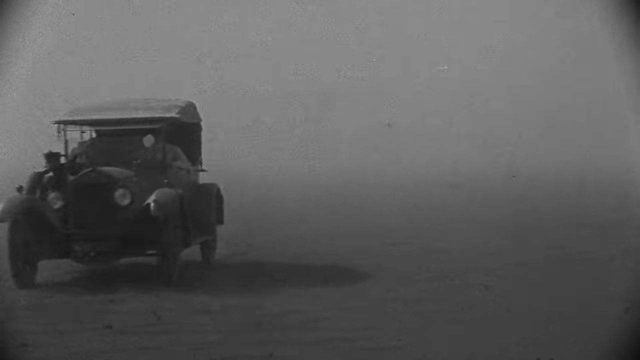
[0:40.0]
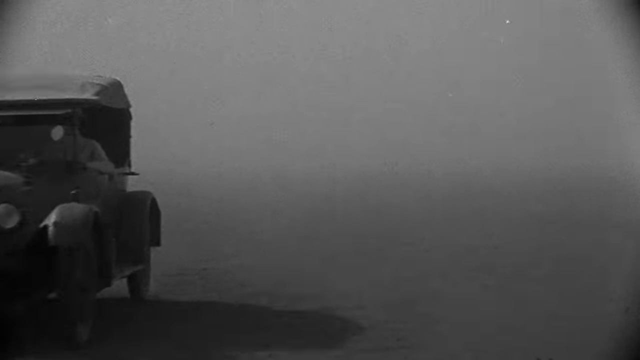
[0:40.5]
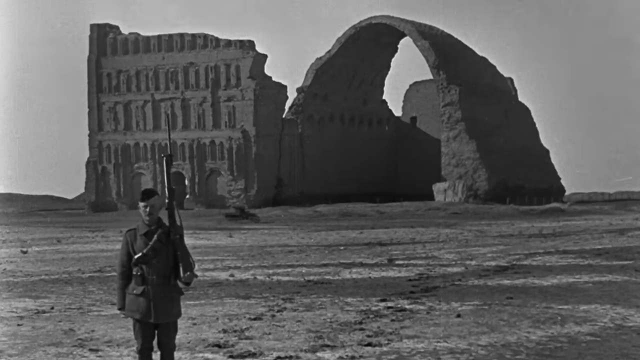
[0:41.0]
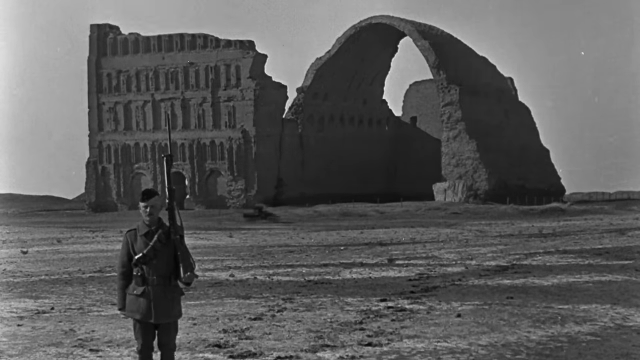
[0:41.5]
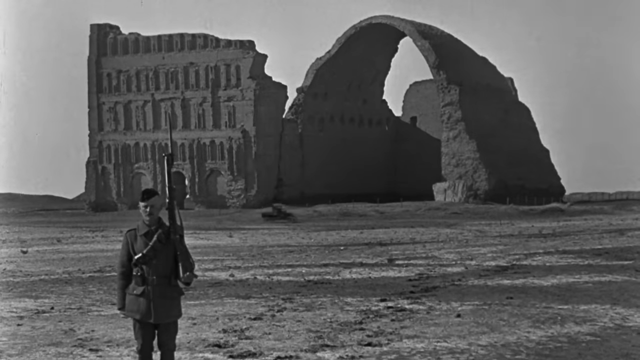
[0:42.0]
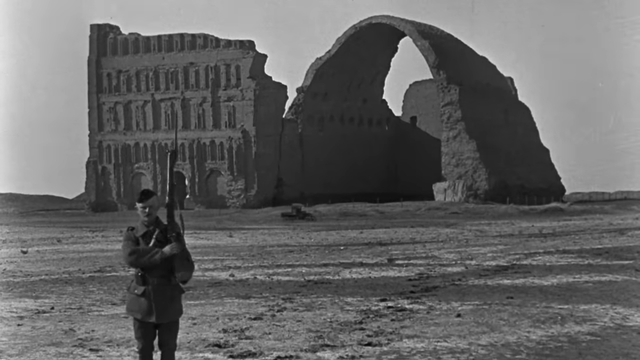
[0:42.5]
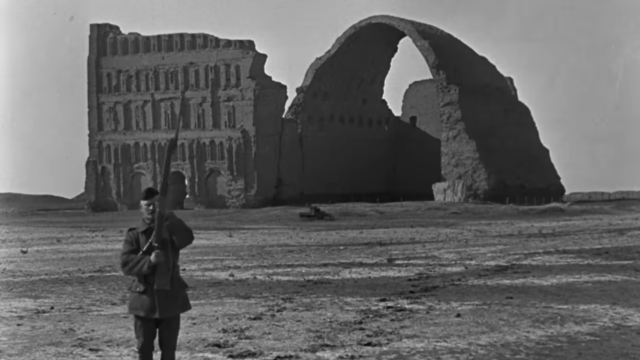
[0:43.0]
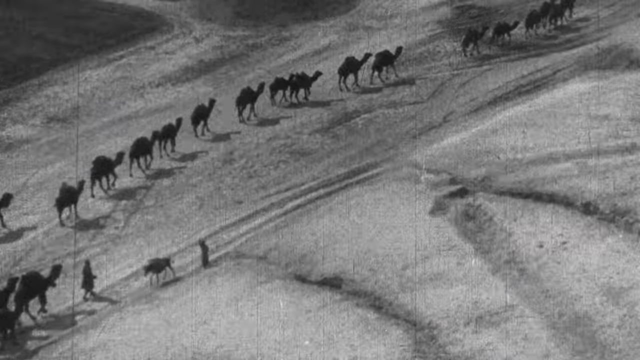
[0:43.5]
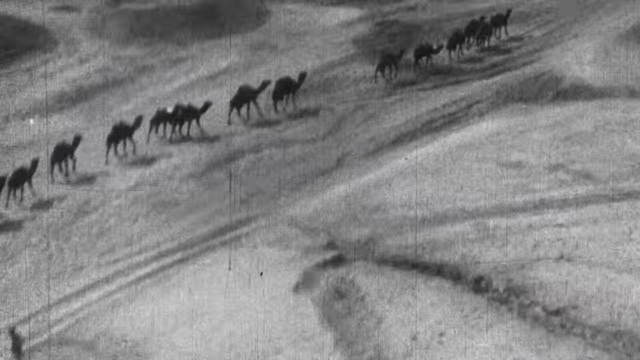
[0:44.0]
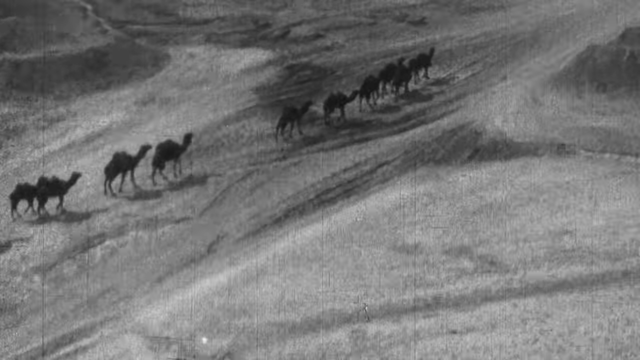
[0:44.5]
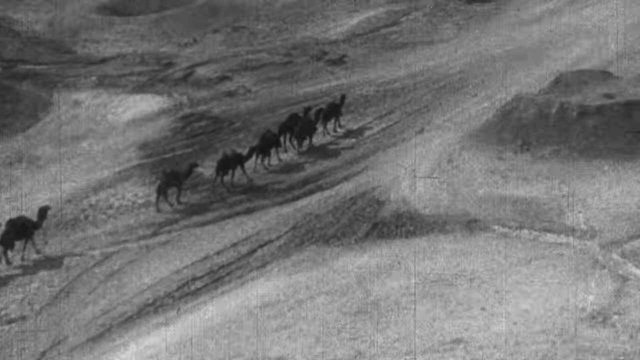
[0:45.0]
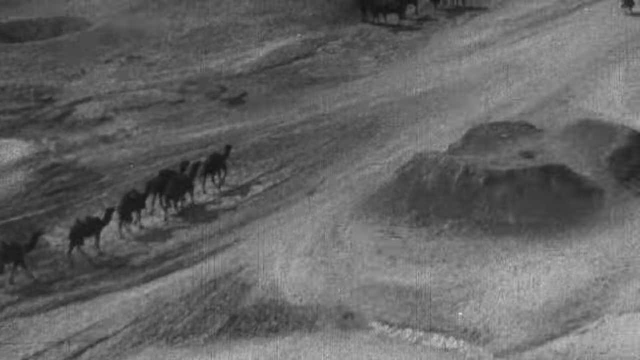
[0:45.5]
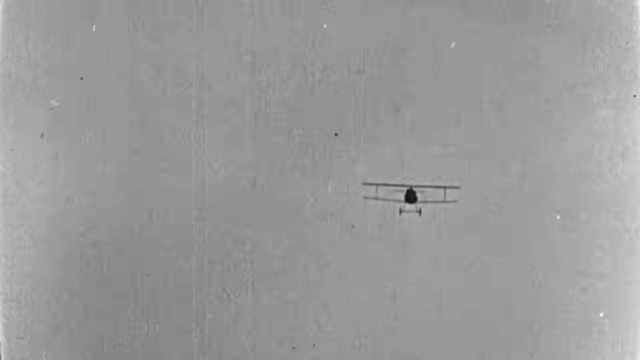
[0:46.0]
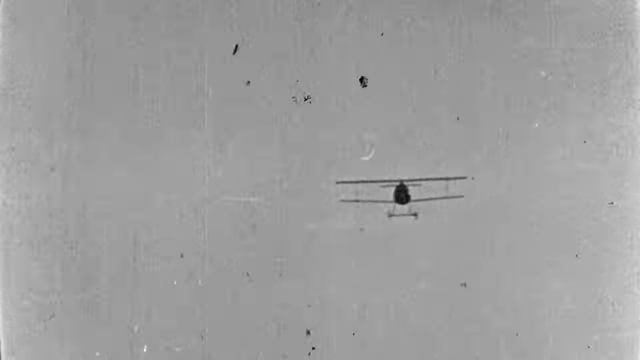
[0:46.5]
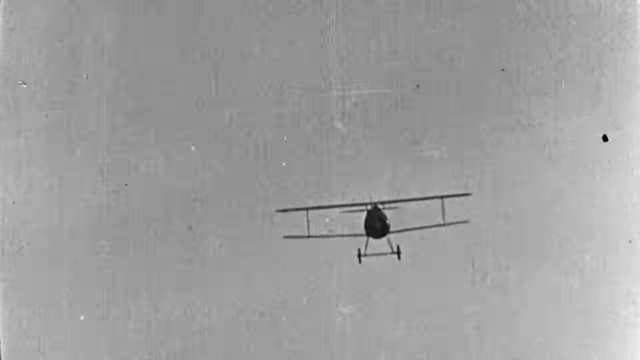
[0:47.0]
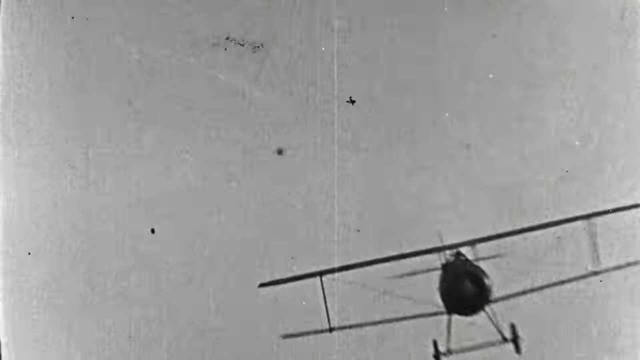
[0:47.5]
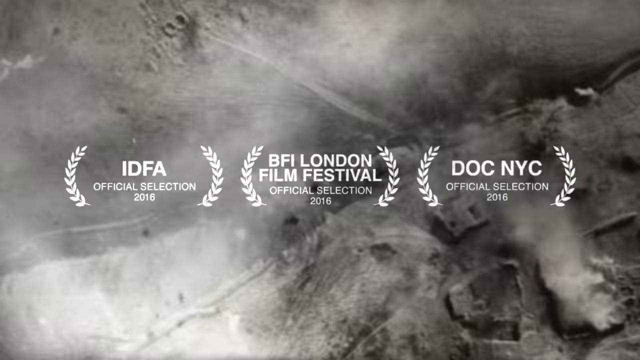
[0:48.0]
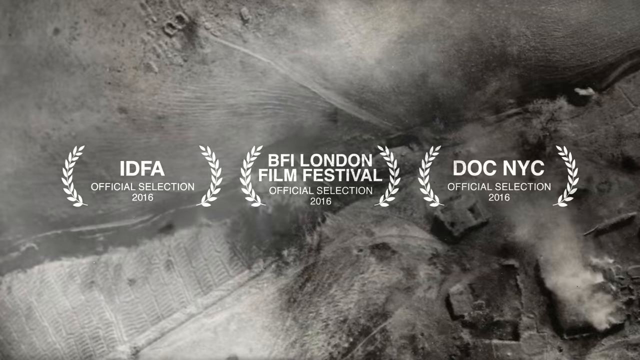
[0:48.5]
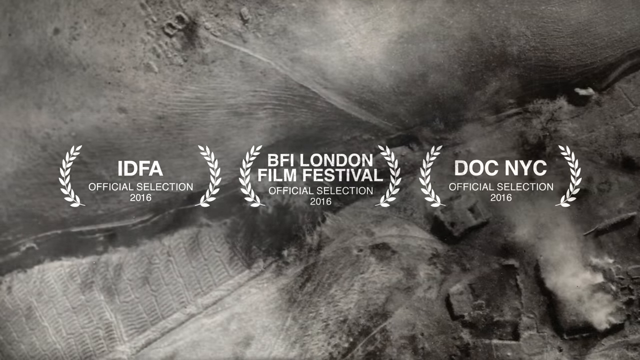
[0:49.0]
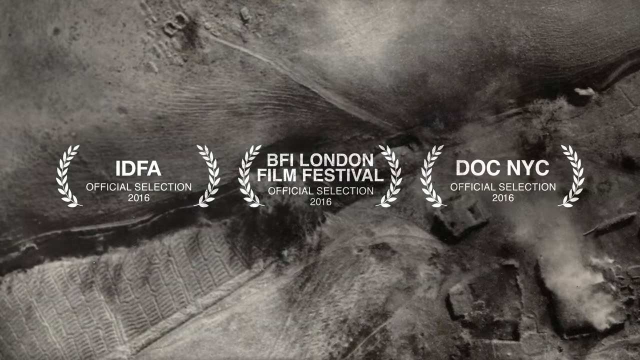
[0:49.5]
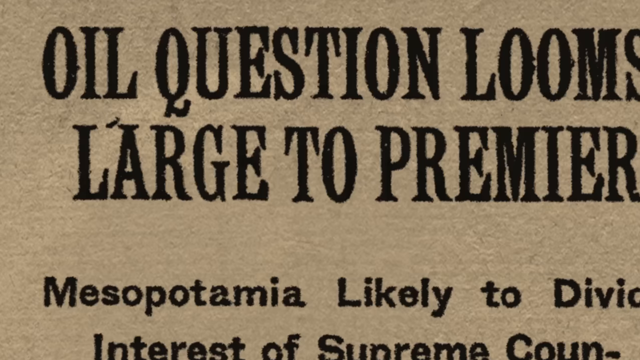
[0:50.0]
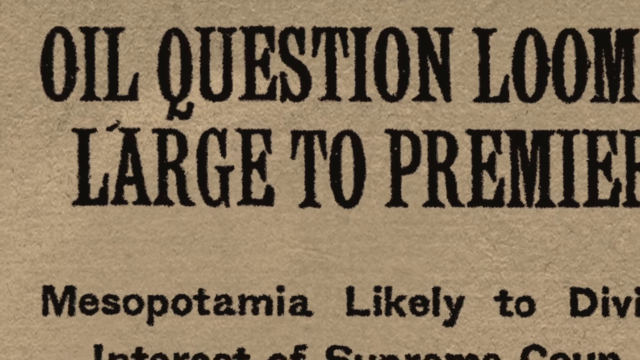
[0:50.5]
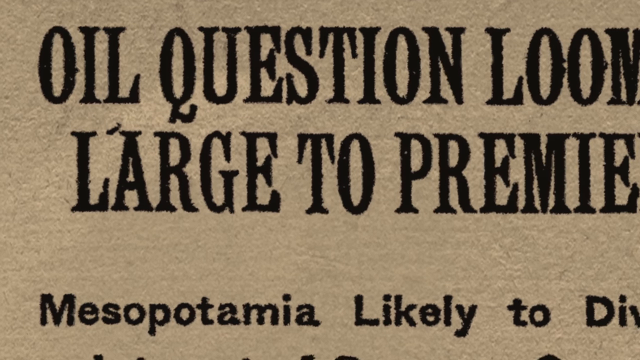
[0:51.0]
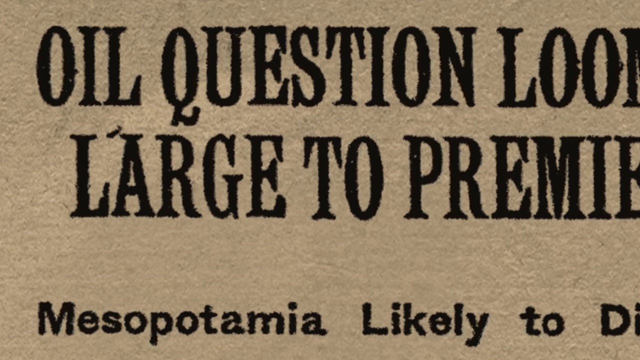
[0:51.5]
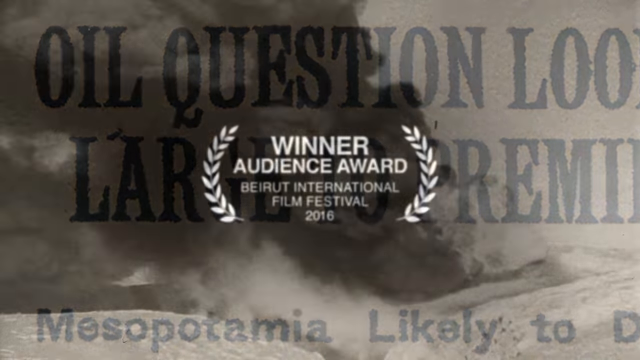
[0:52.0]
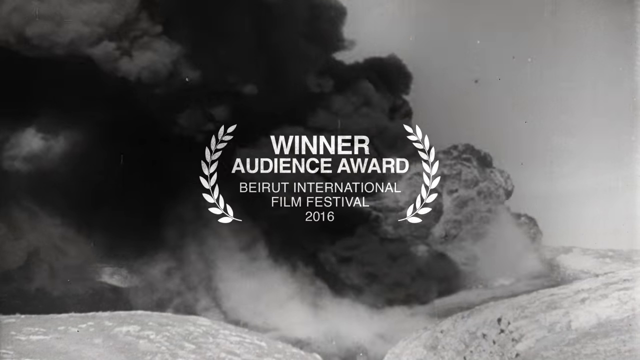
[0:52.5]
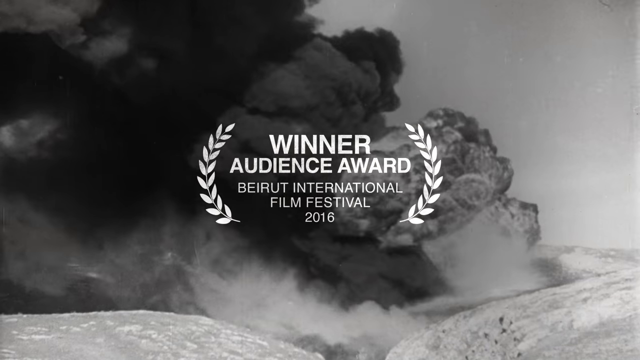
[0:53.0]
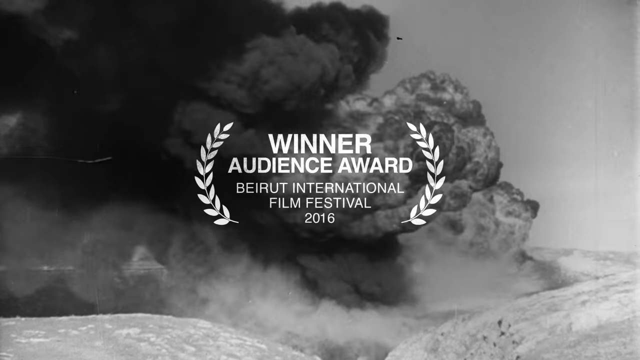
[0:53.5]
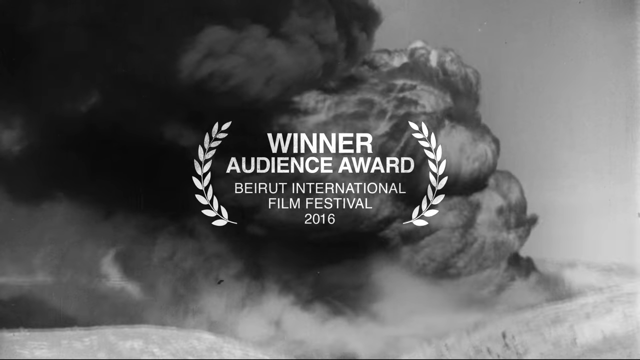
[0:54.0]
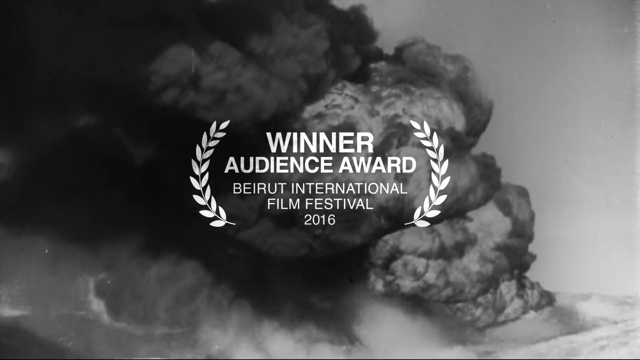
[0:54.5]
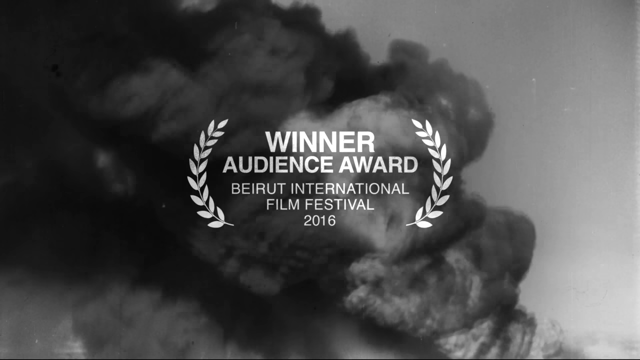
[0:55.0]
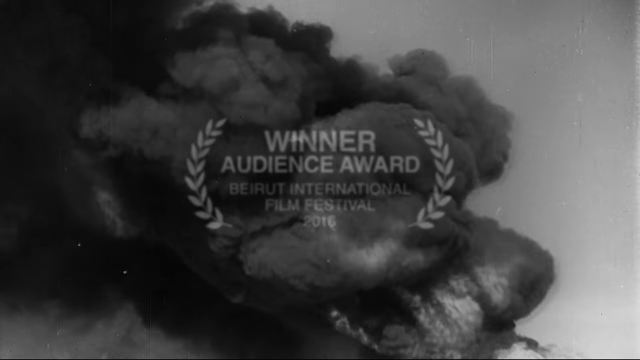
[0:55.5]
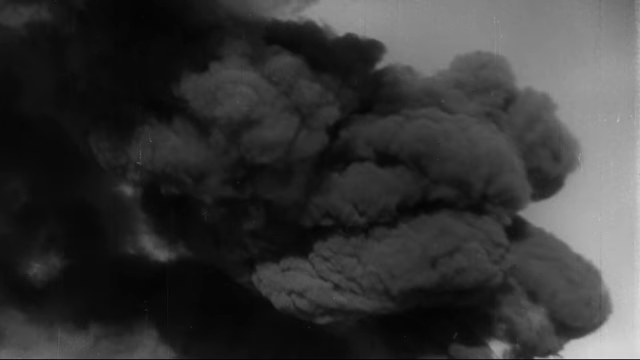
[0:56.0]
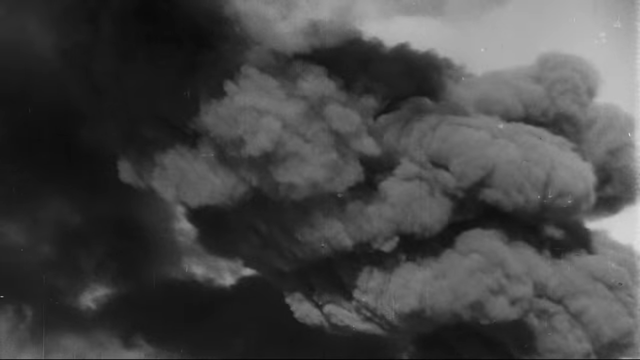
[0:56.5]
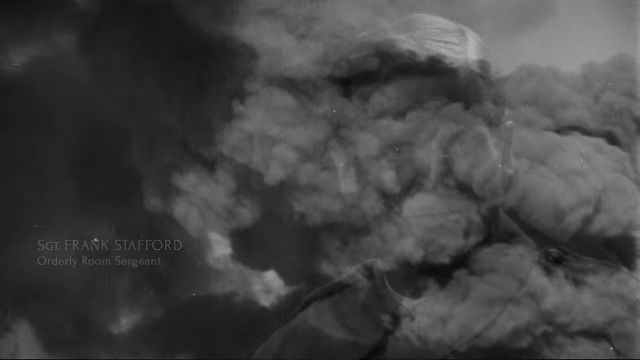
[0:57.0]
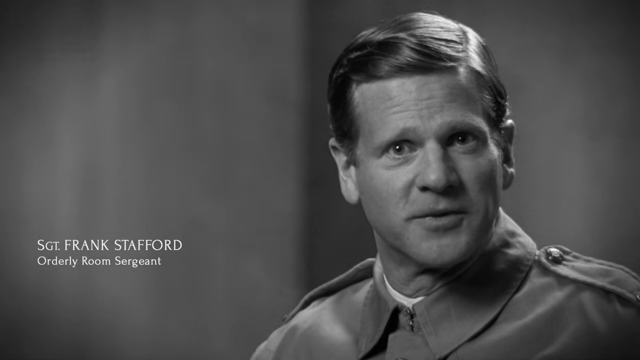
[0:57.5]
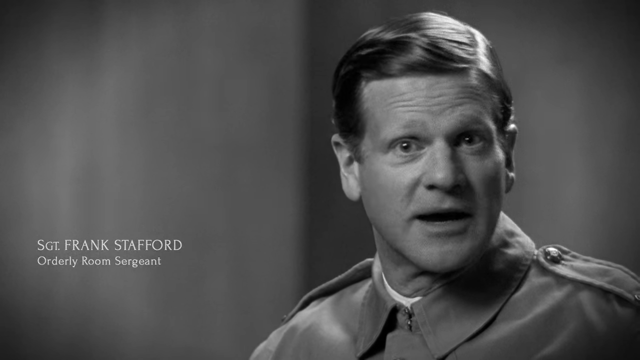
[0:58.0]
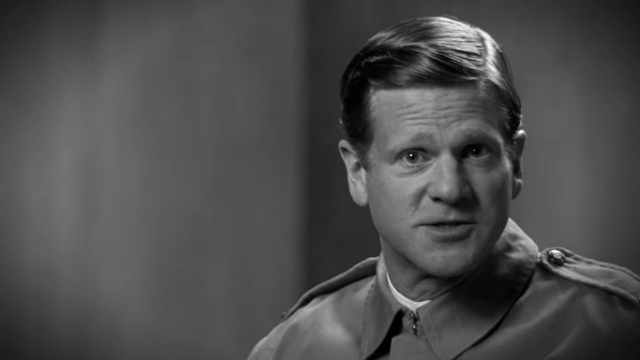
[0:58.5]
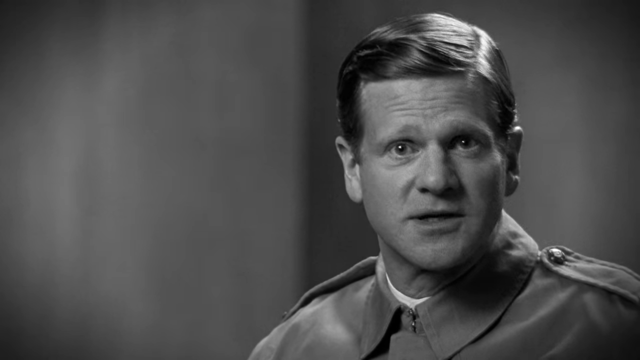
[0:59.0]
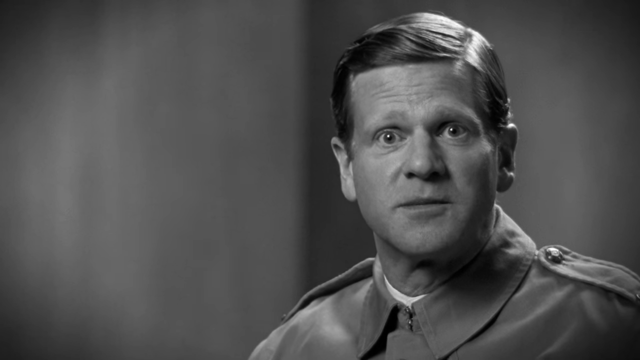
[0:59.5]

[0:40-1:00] In a dust storm, apparently out in a desert, an older car with large fenders and a material top like canvas drives toward the camera very fast, appearing to be at its top speed. The scene moves to another part of the desert where there appear to be ruins of an ancient structure; a lone soldier there appears to be practicing rifle positions with his rifle. An aerial view shows a convoy of camels in the desert, seemingly filmed from a plane, and then a plane is seen flying in the sky. Text superimposed over rough, aggressively billowing and rolling black smoke and sand, like an explosion, indicates that the film was nominated for Doc NYC, BFI London Film Festival and IDFA, and was winner of the Audience Award at the Beirut International Film Festival, 2016.